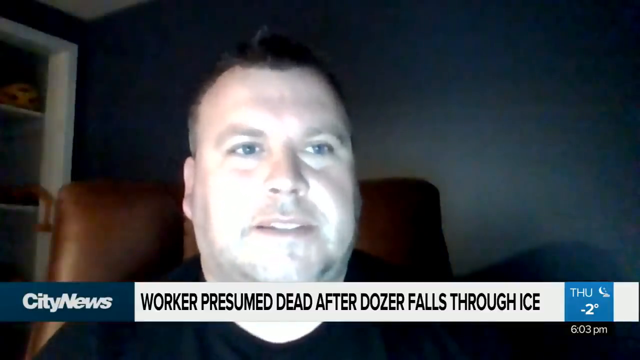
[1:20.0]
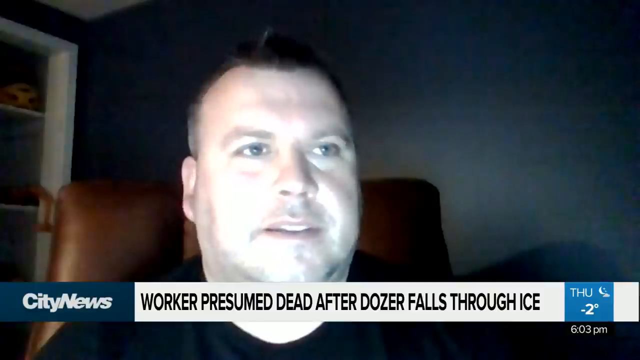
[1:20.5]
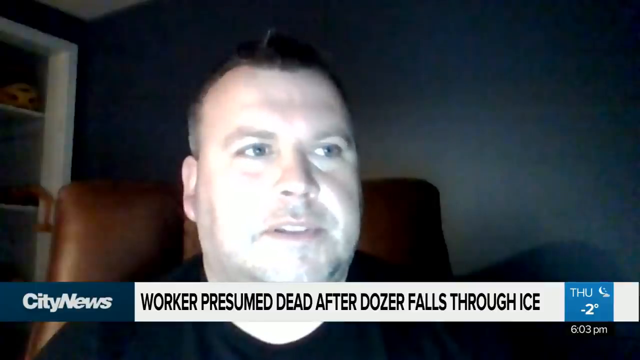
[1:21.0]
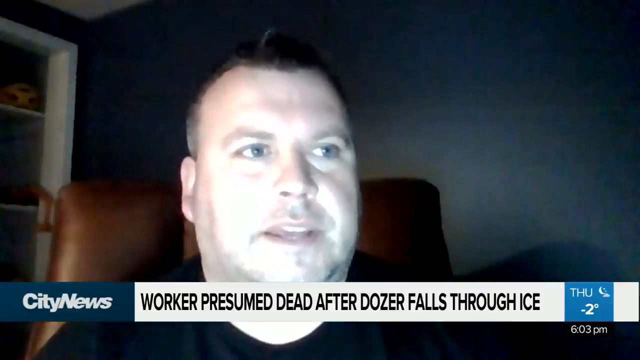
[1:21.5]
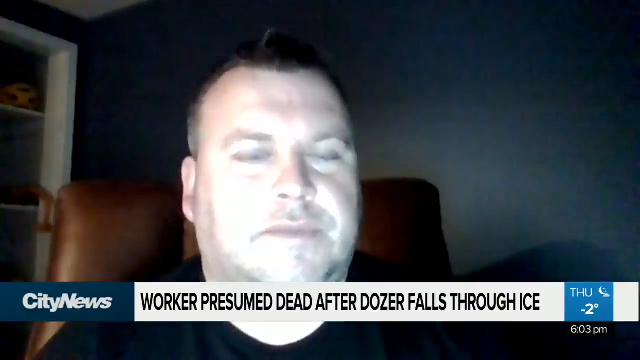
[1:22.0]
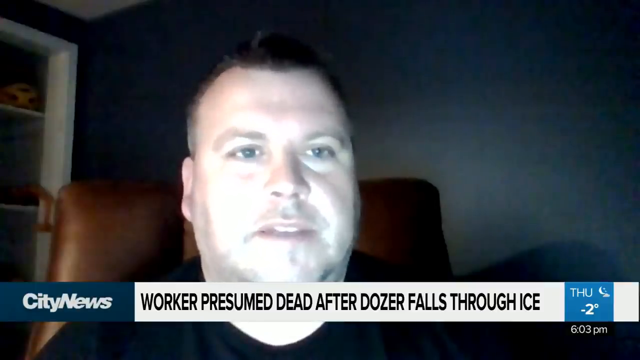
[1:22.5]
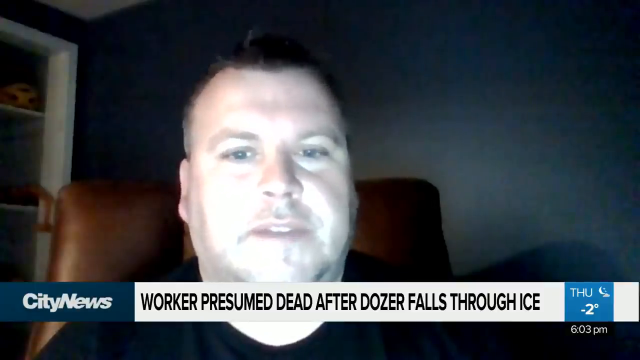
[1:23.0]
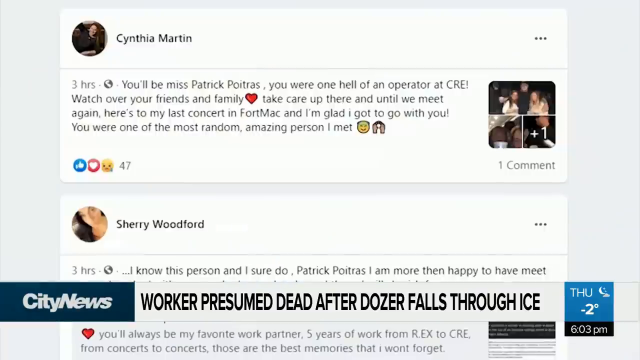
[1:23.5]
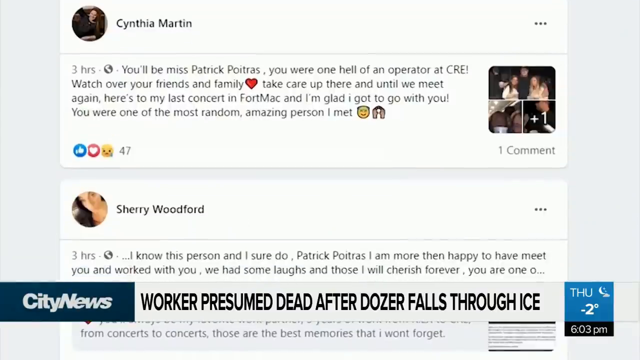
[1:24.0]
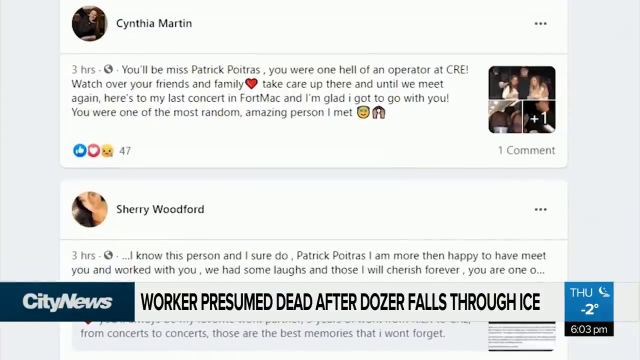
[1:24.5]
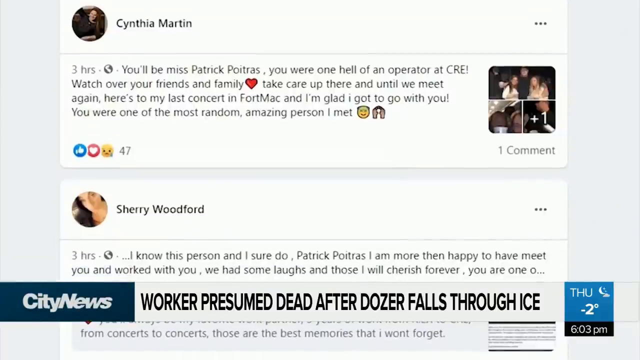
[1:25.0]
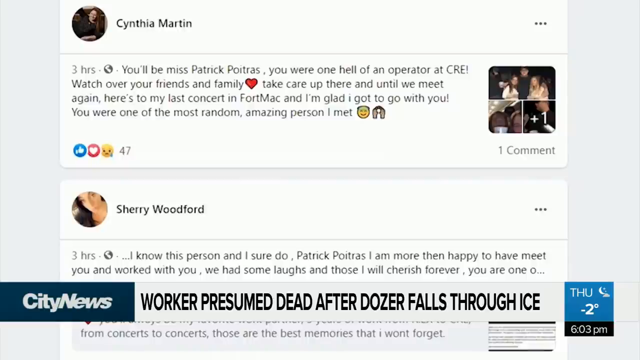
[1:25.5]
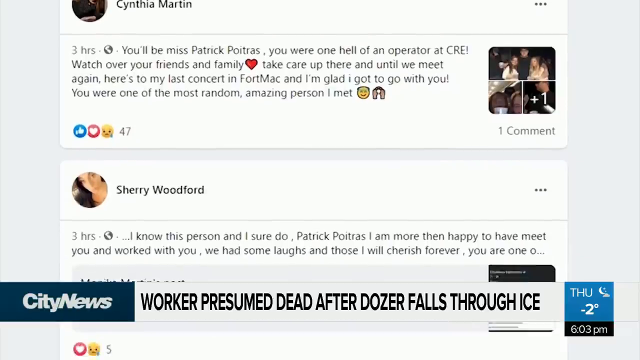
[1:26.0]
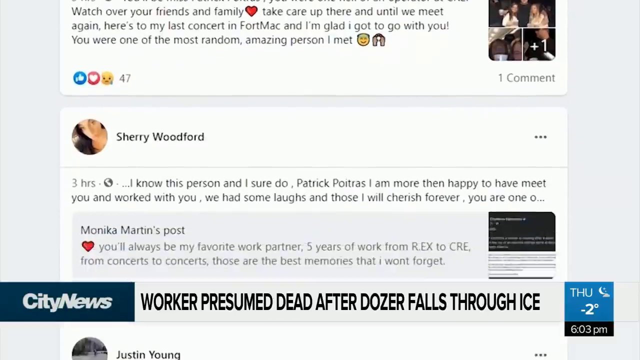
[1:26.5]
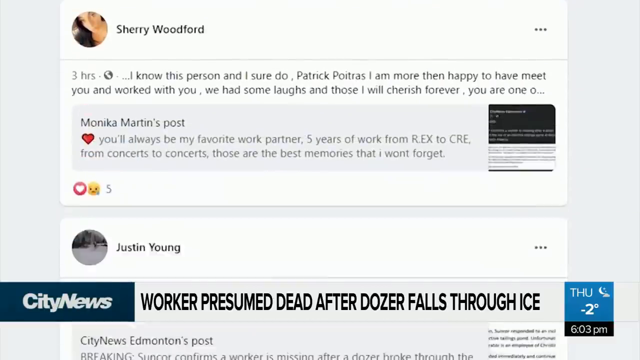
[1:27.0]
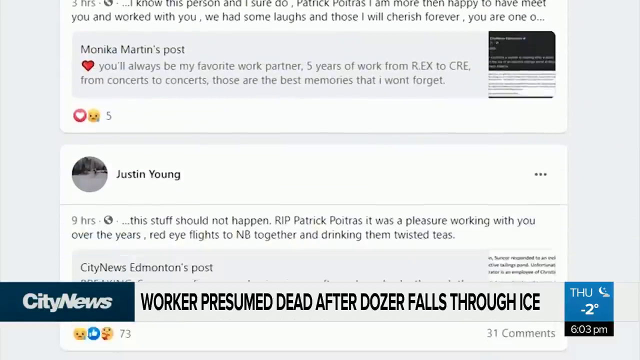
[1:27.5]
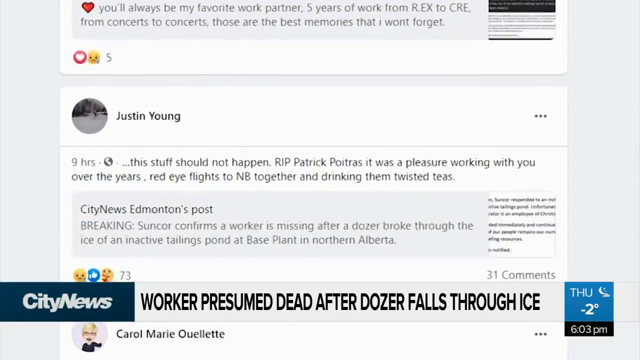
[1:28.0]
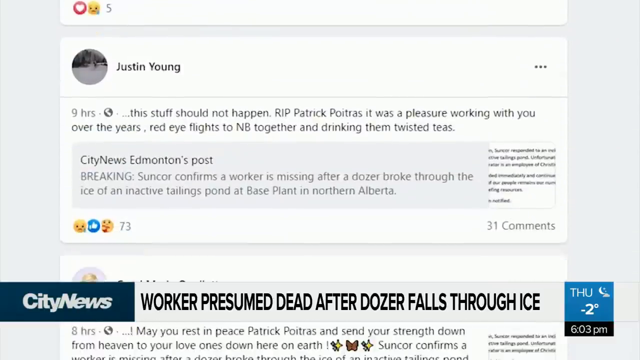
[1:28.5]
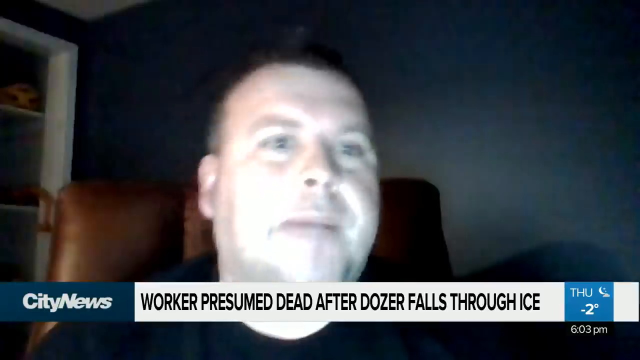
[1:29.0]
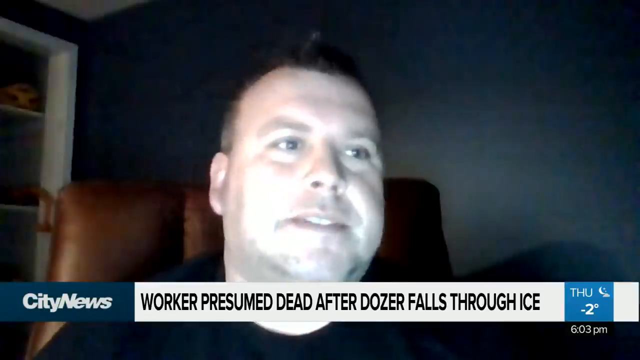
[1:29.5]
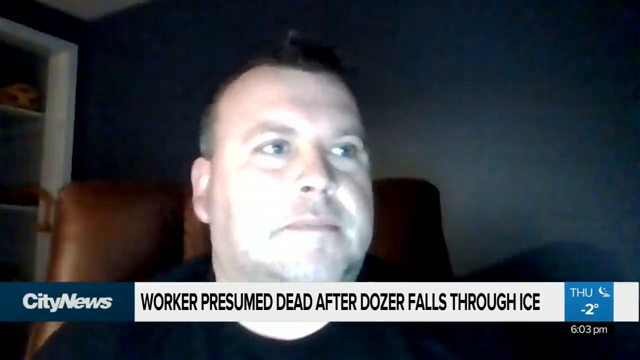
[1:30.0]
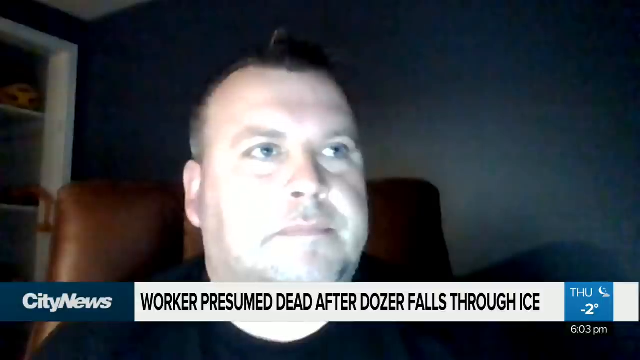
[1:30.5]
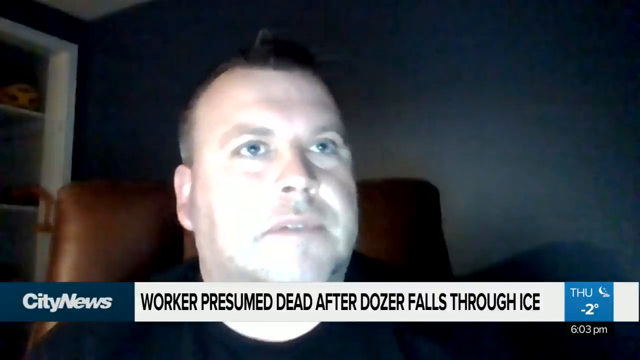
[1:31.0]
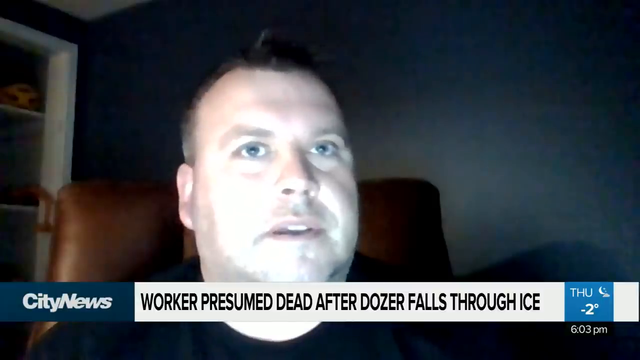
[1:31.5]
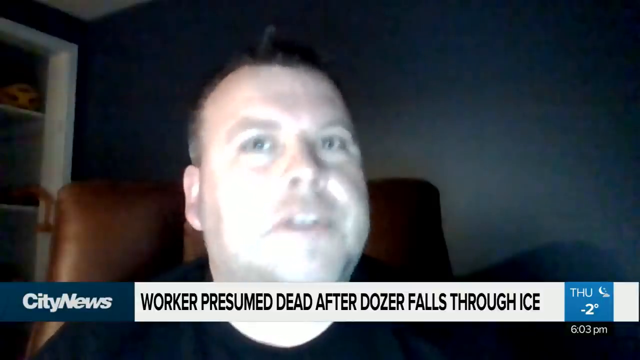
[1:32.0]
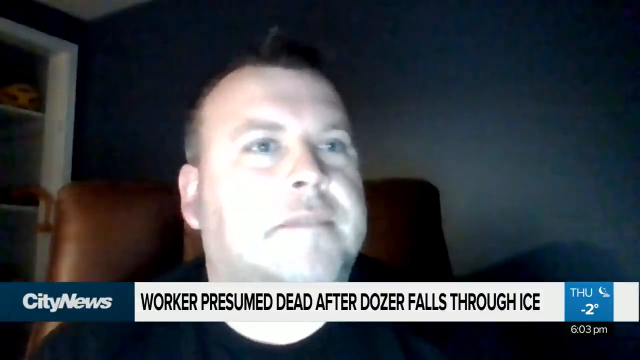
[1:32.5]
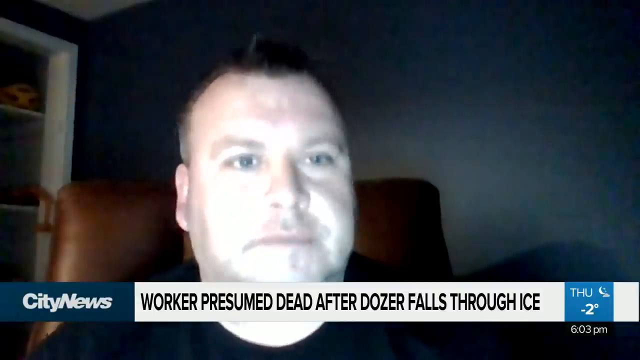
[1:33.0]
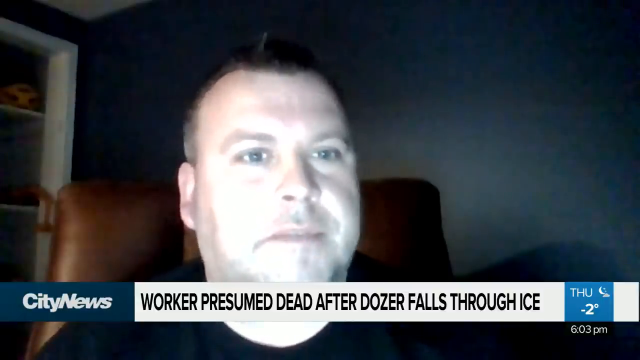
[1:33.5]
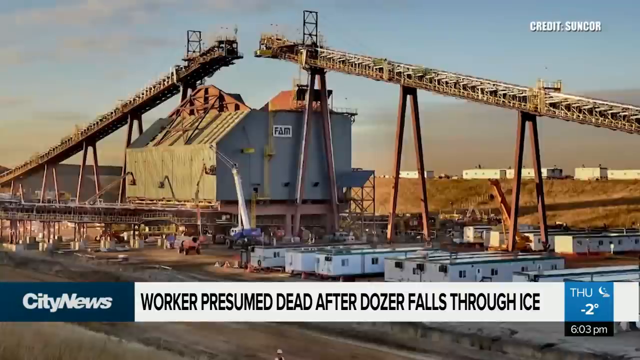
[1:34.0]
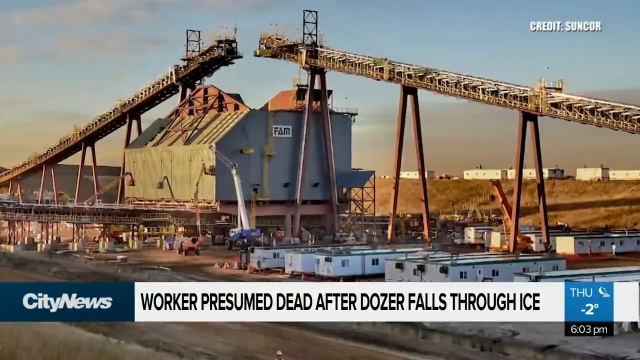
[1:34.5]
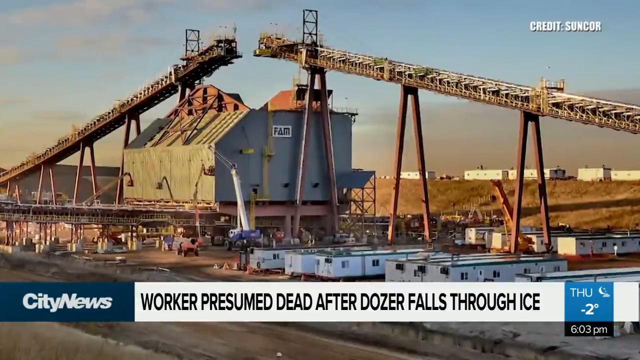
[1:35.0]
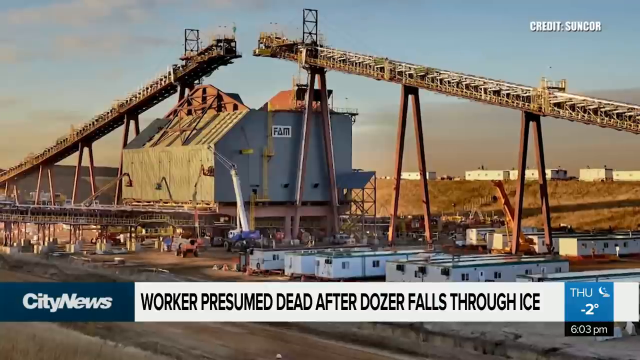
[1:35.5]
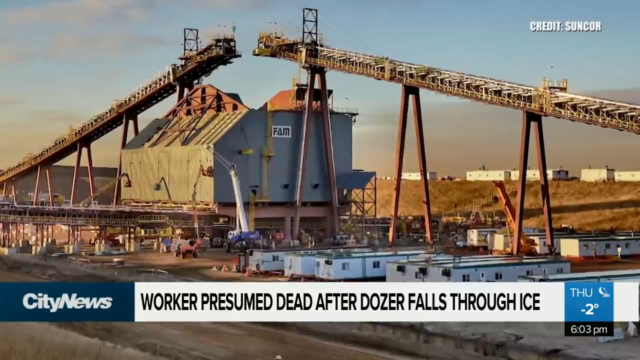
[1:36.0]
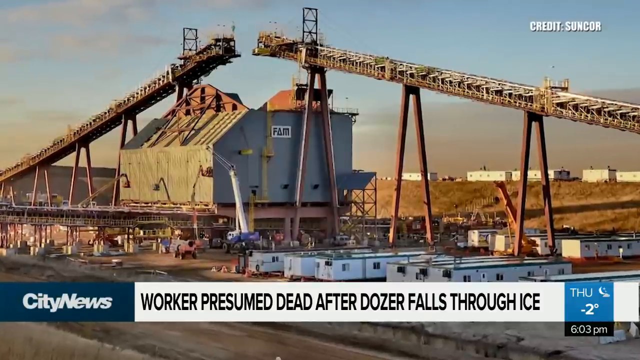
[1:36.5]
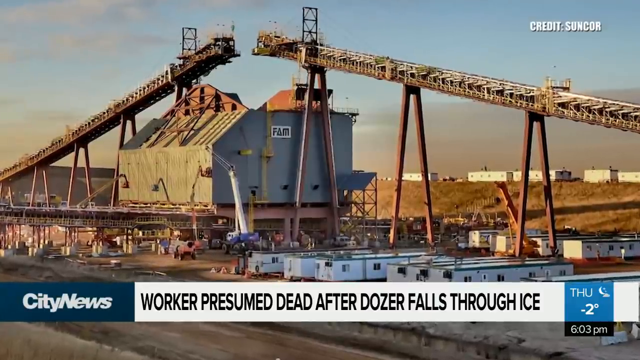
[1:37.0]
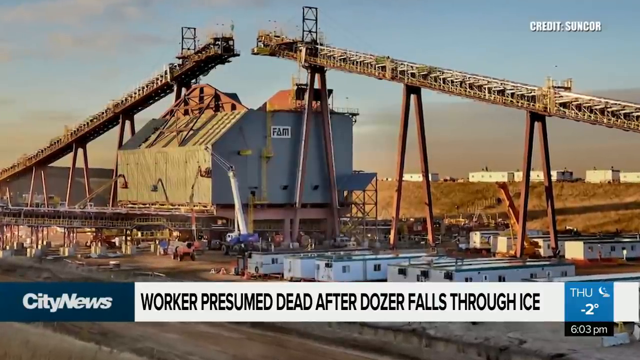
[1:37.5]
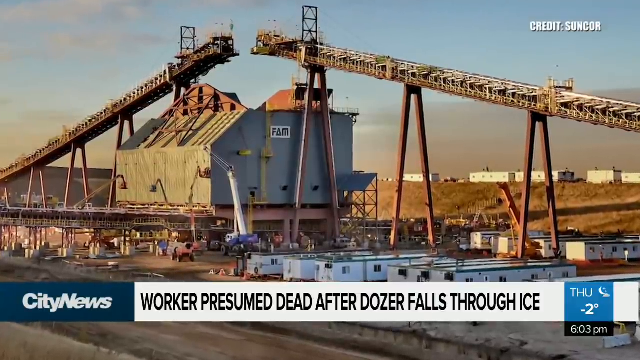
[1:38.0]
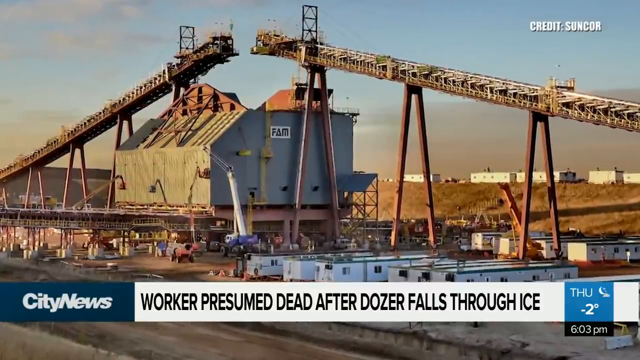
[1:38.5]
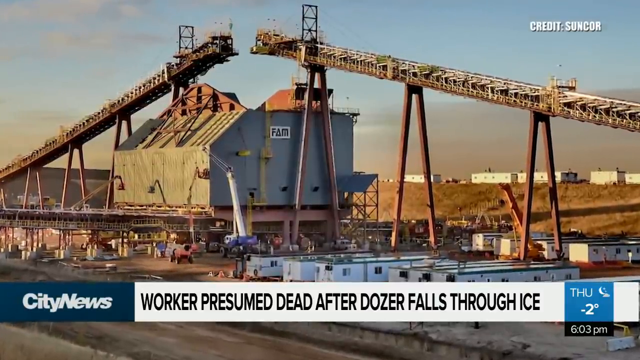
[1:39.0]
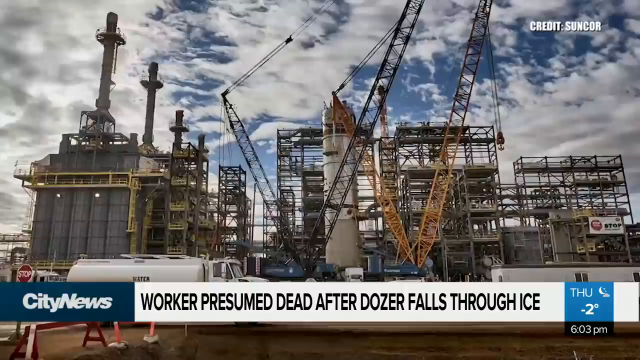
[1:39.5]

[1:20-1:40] Joey St. Armand talks about his nephew to City News over a Zoom call, with the time shown as Thursday night at 6pm and the headline below reading "worker presumed dead after dozer falls through ice." The view flies over to a Facebook post from Cynthia Martin that says "you will be missed Patrick, you were one hell of an operator, watch over your friends and family and take care of them till we meet again." A comment from Sherry Woothward says "I know this person and I sure do, I'm more than happy to have met and worked with you, we had laughs," and a comment from Justin Young says "this stuff should not happen, RIP Patrick, it was a pleasure working with you over the years." The video returns to the uncle in the Zoom interview with the City News team, then shows a picture of a quarry that looks like some sort of construction factory, with "Credit Suncor" in the top right corner.